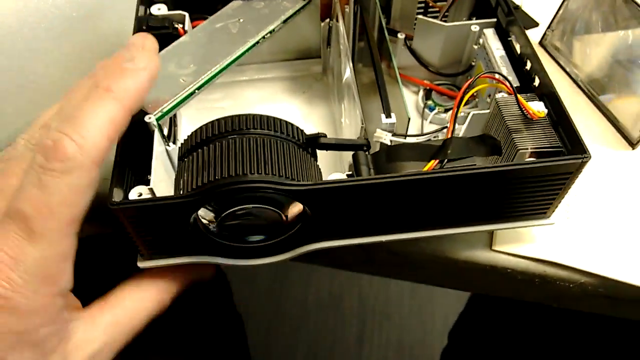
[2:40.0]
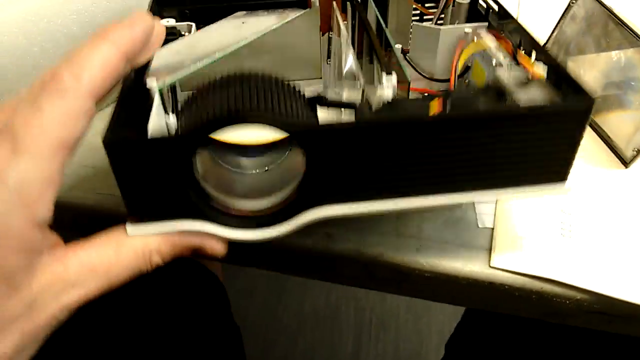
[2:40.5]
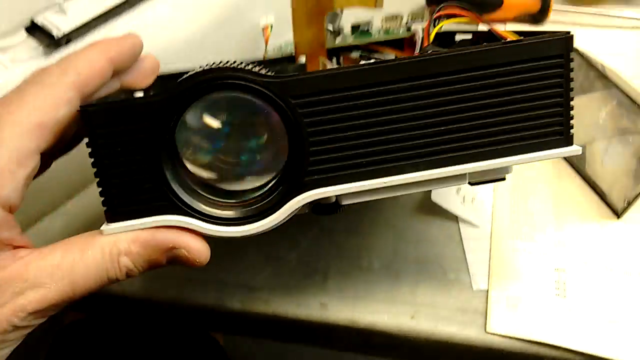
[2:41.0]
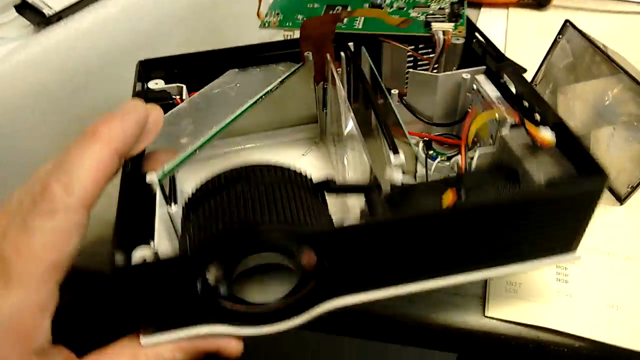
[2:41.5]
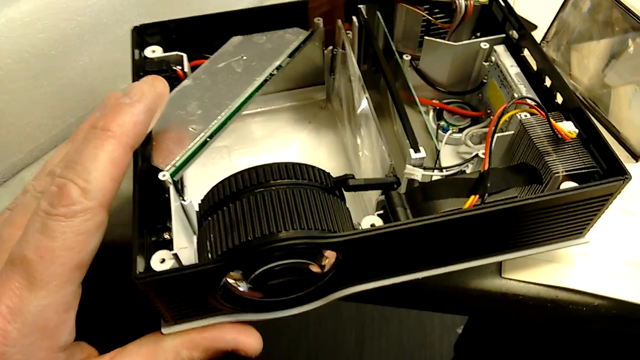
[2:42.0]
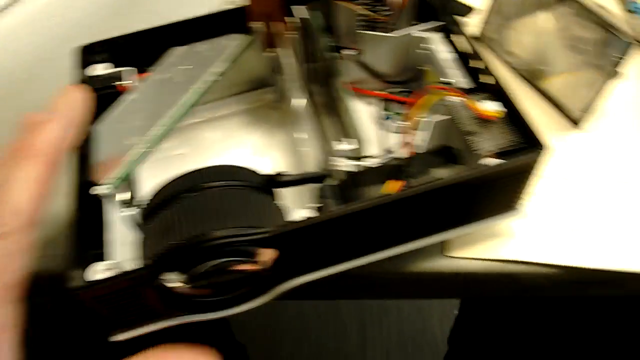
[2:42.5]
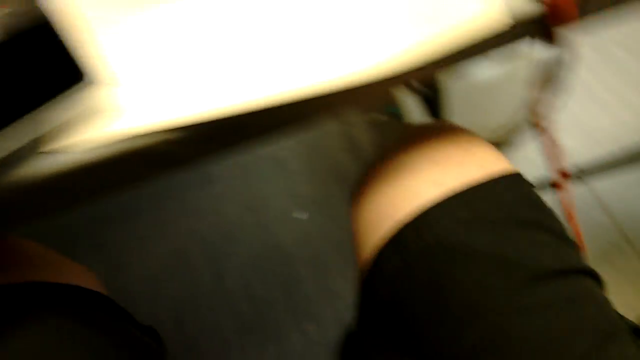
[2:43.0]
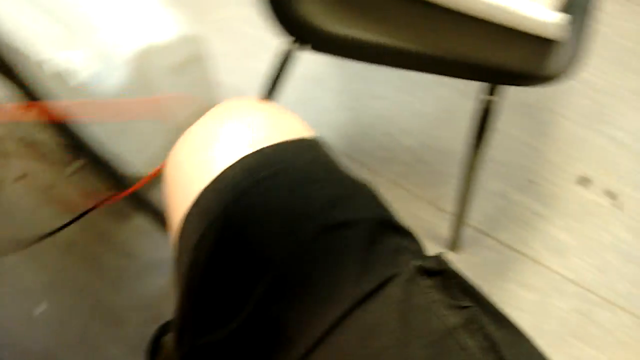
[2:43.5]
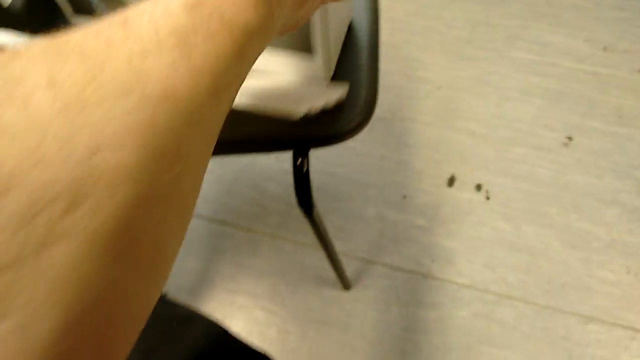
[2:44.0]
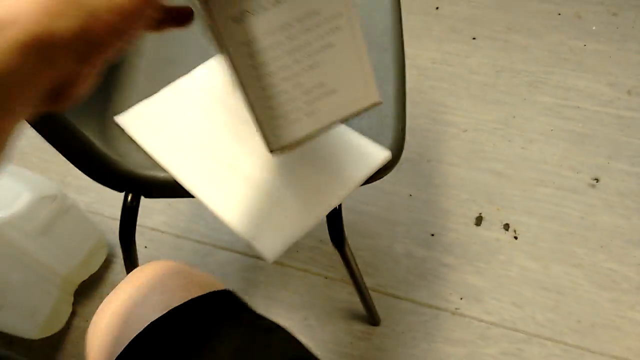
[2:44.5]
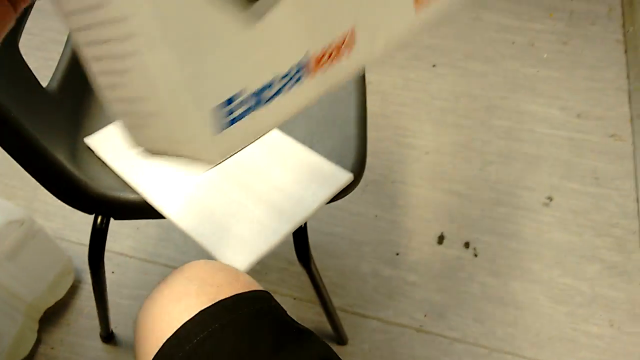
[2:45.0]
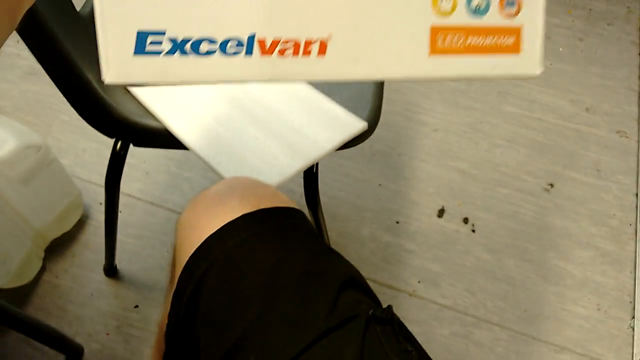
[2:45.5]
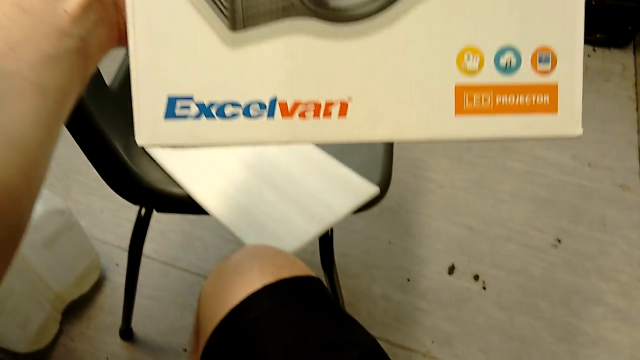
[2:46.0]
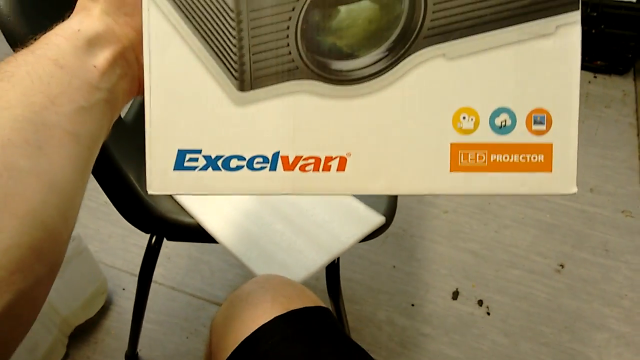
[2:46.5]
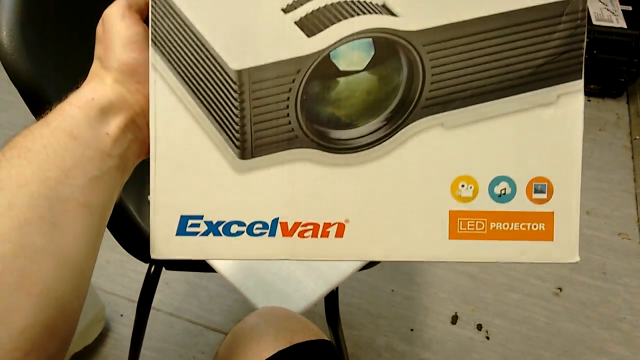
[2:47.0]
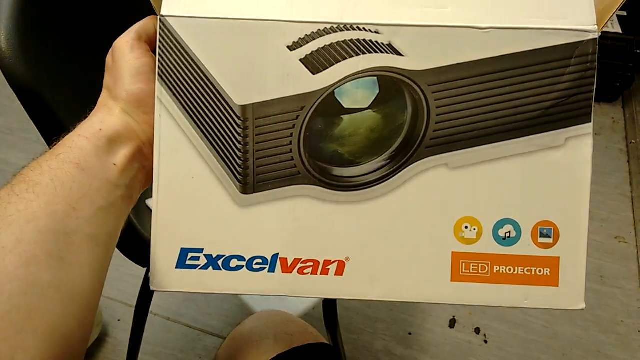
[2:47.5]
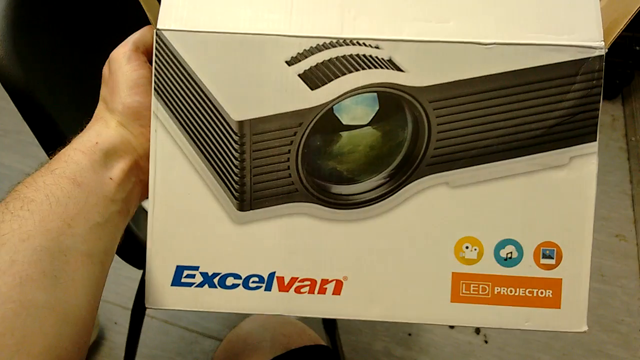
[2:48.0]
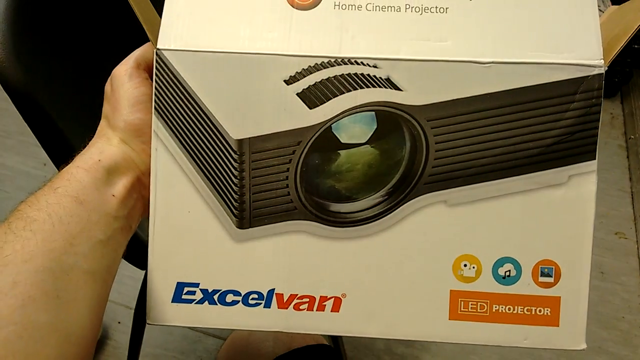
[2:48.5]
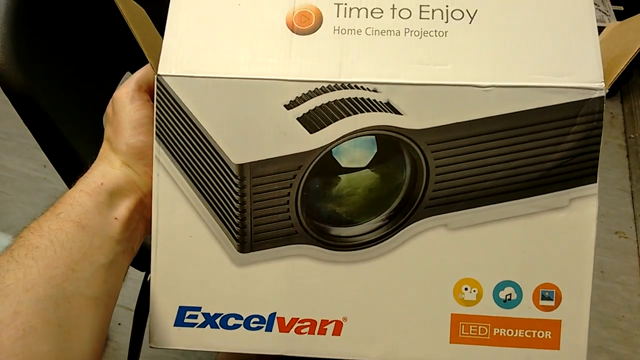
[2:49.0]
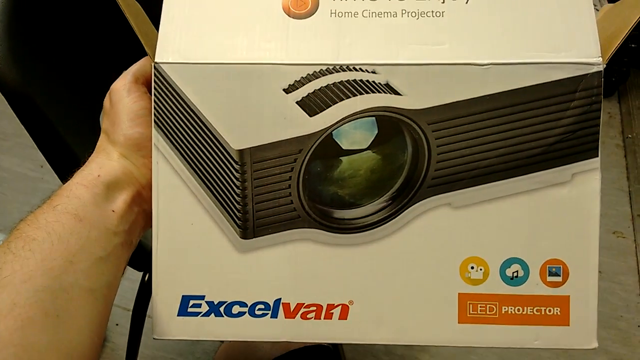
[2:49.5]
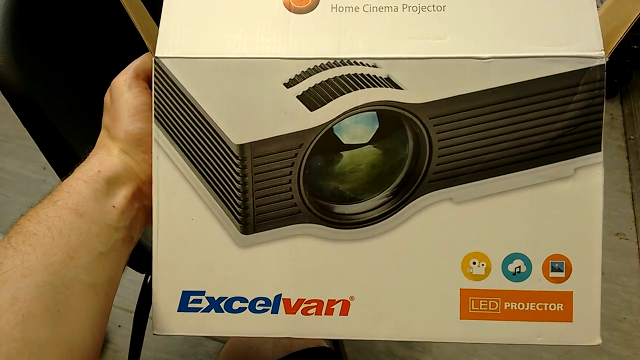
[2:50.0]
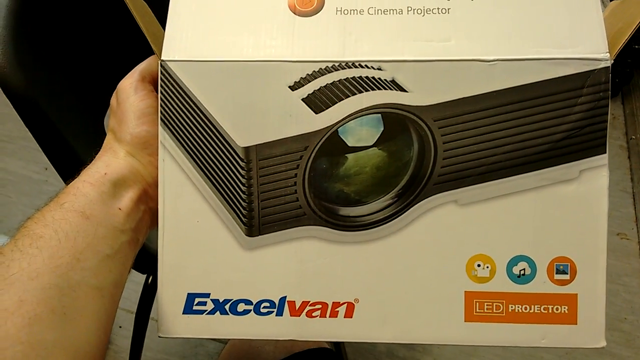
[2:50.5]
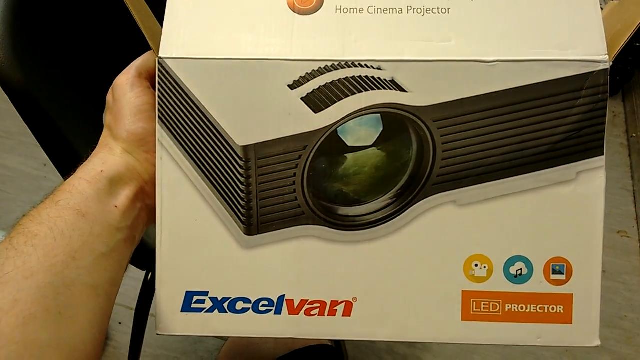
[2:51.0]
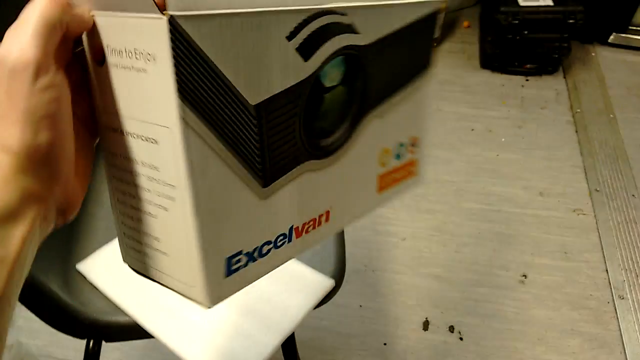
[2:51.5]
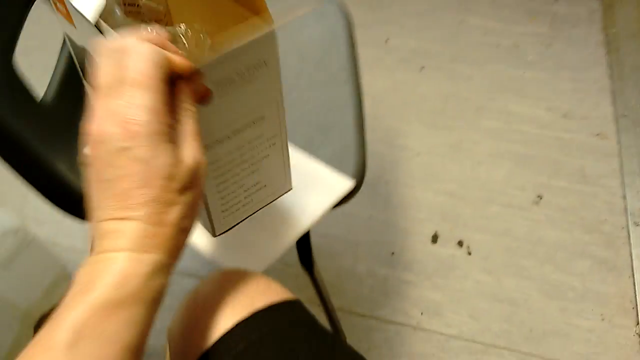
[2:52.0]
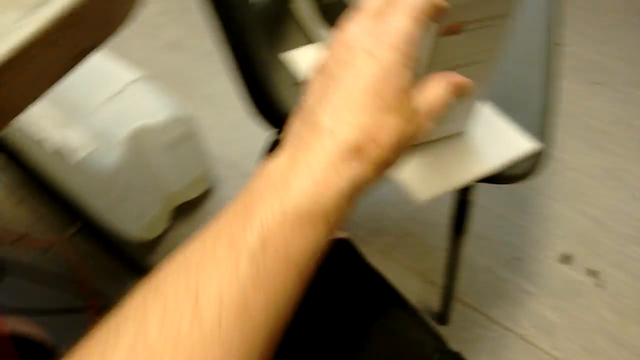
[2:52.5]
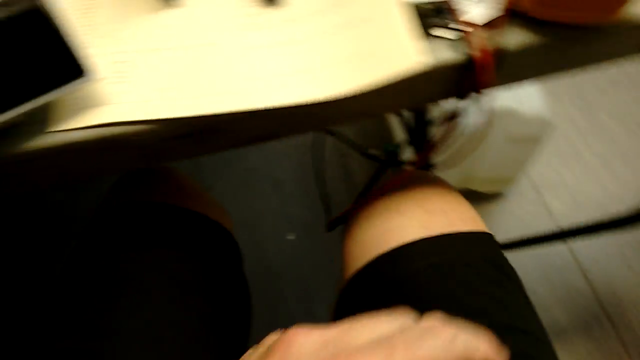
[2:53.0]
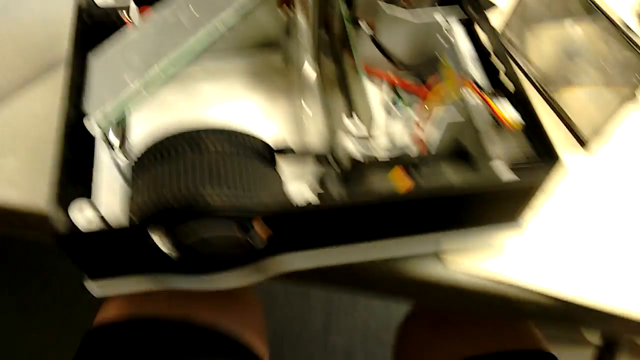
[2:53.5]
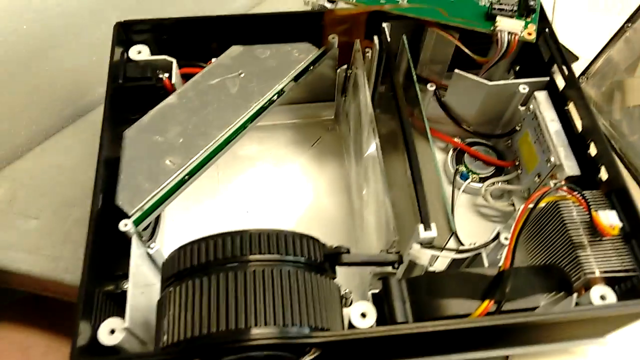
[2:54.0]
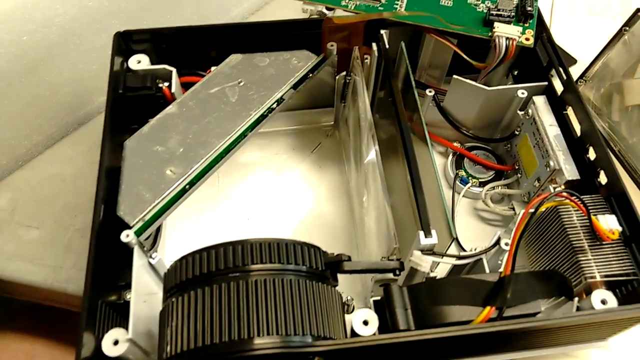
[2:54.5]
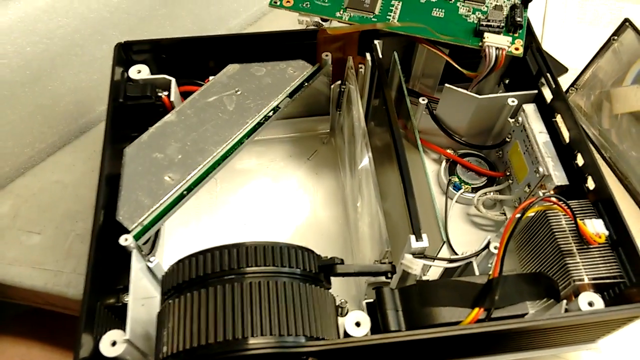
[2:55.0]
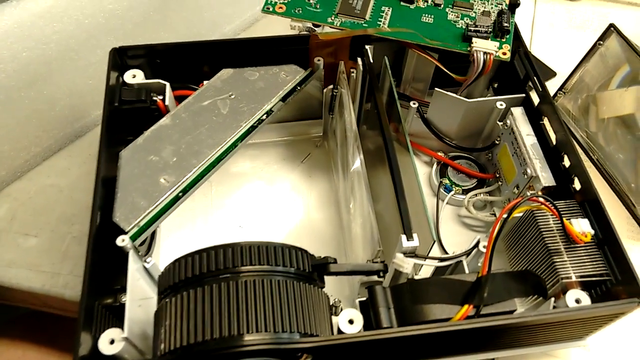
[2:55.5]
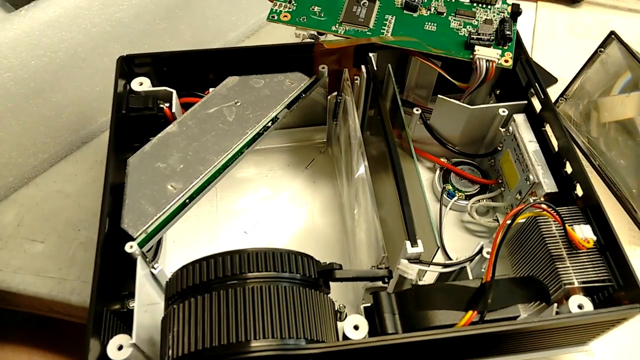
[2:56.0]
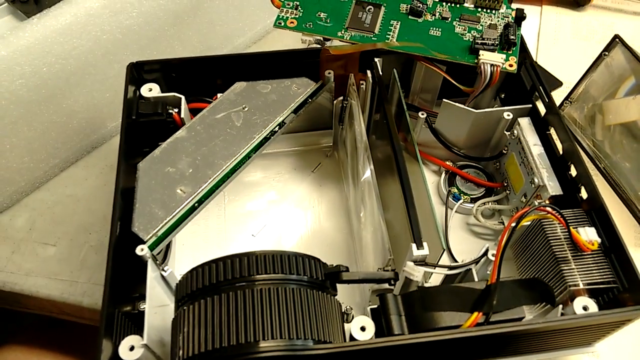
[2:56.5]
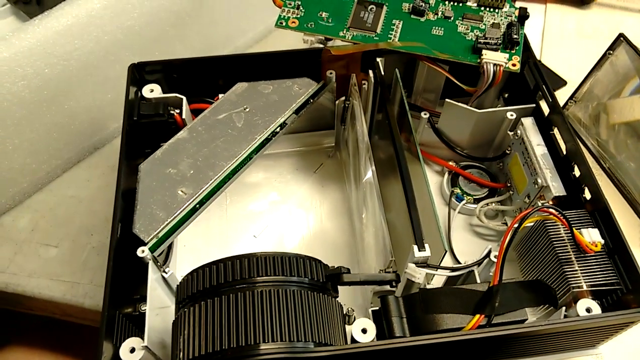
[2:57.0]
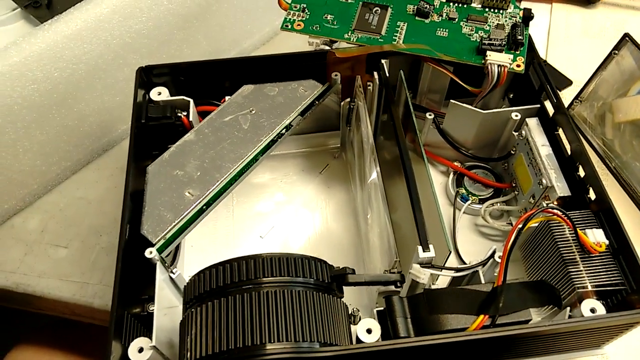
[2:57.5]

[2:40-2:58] He lifts the projector up off the desk to show what it looks like from the front. Then, with his body turned to the right, he holds up a box sitting on the chair that has the name of the projector on it, showing what it looks like put together. This appears to be some sort of unboxing video about the inexpensive projector.